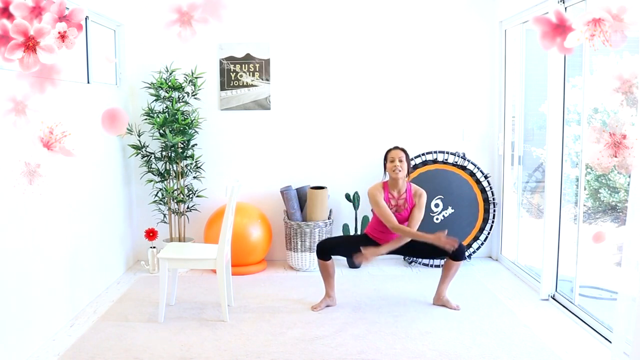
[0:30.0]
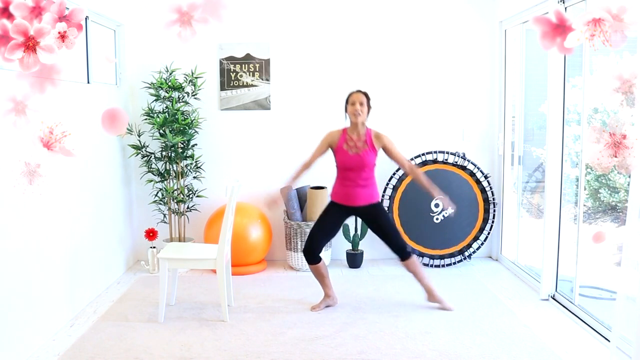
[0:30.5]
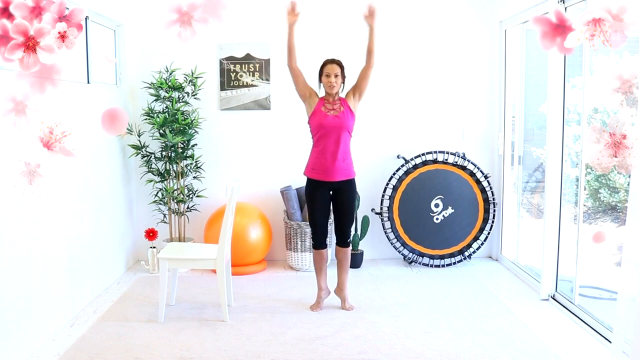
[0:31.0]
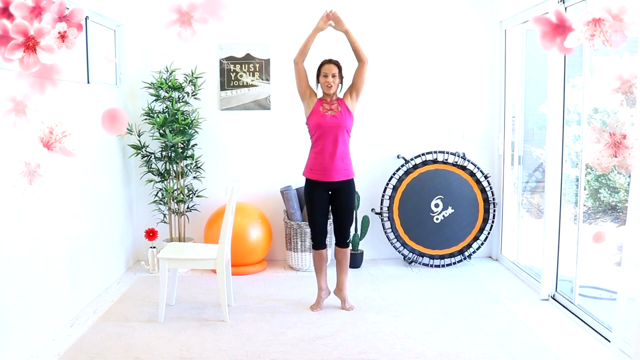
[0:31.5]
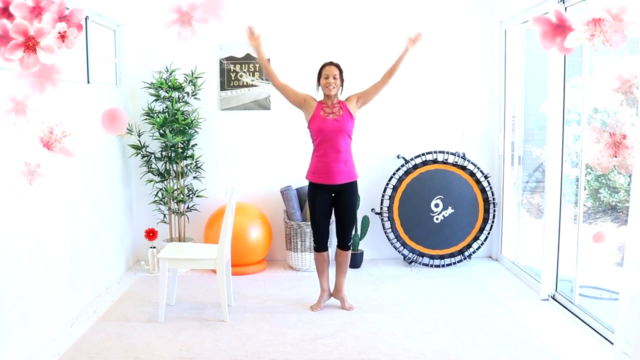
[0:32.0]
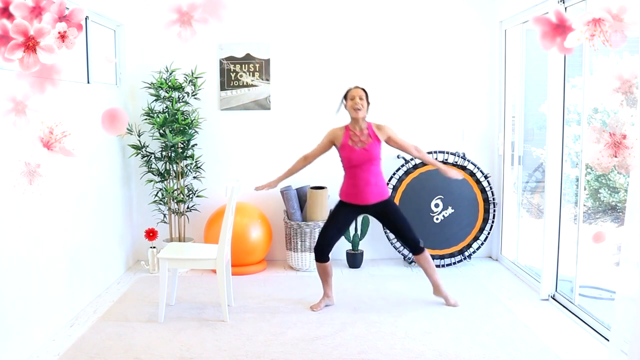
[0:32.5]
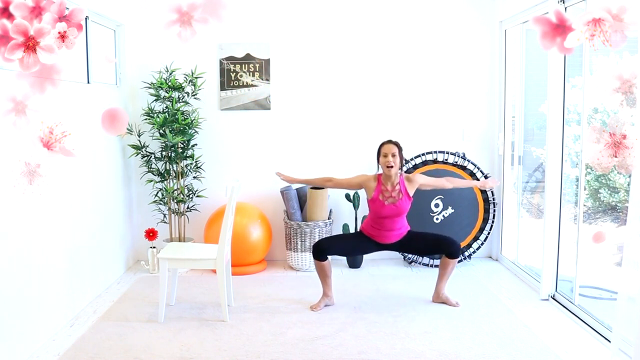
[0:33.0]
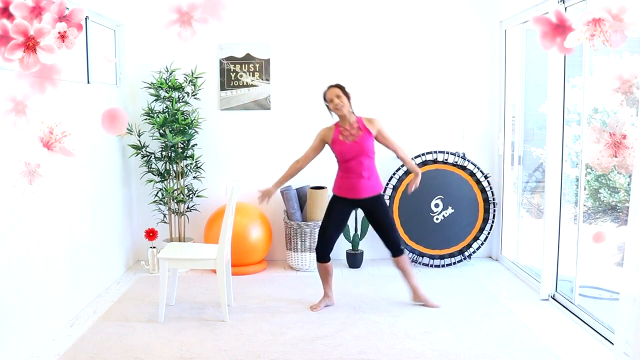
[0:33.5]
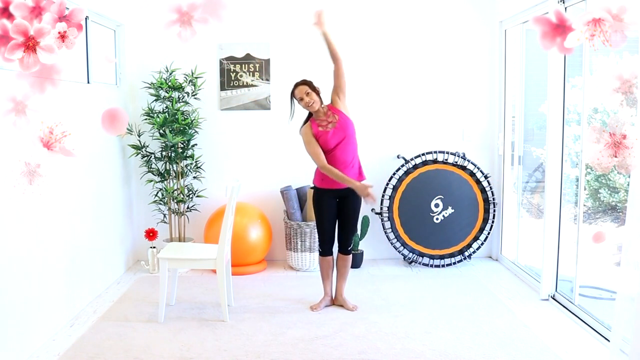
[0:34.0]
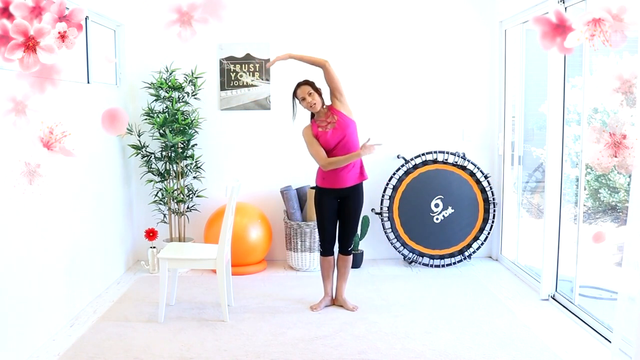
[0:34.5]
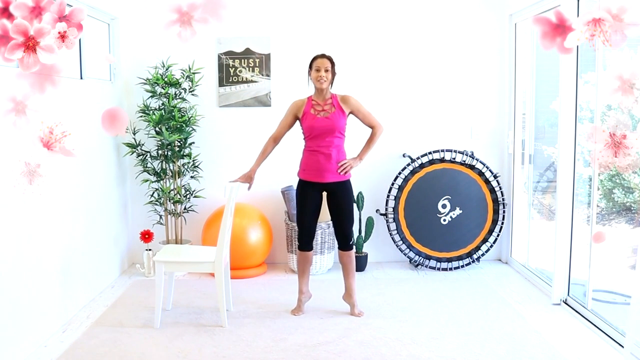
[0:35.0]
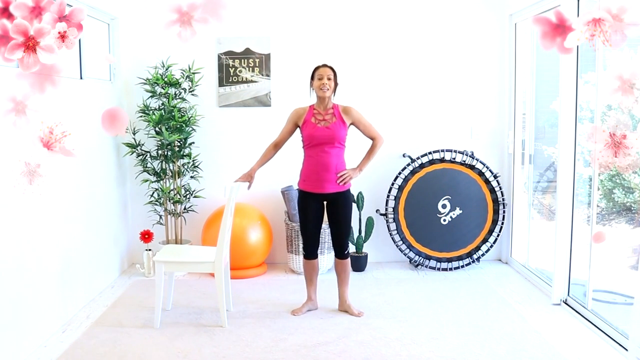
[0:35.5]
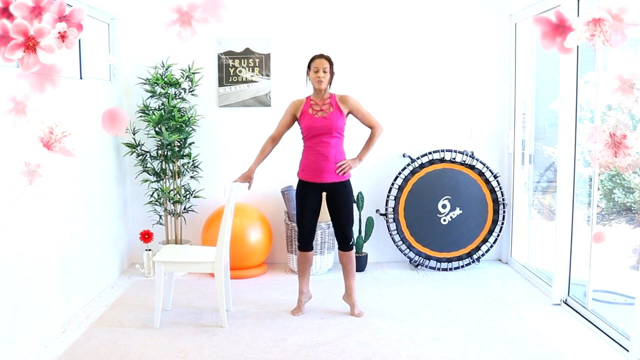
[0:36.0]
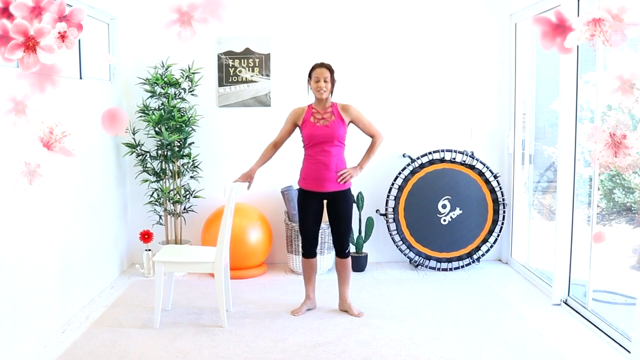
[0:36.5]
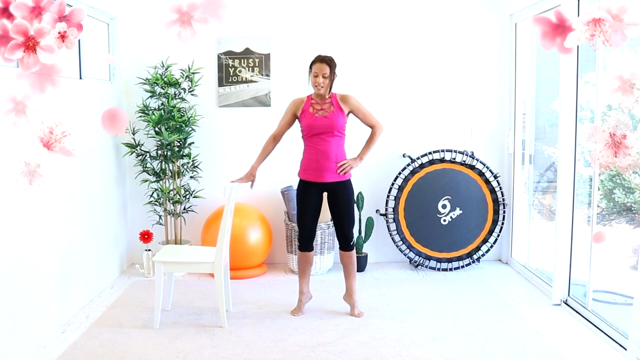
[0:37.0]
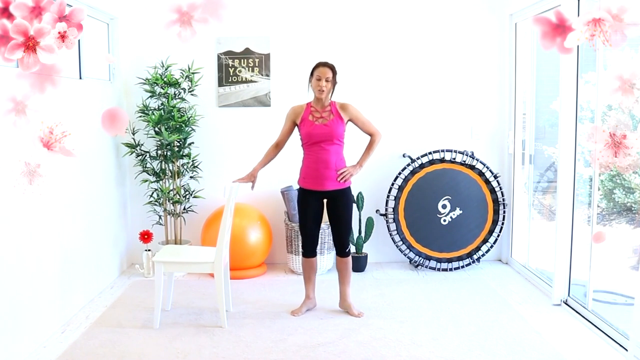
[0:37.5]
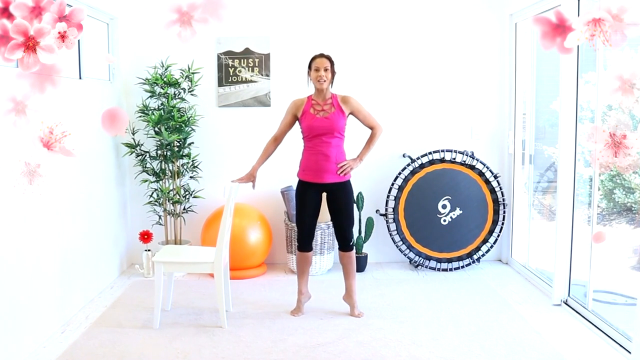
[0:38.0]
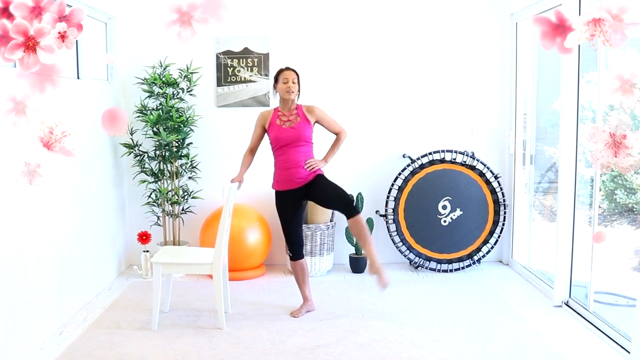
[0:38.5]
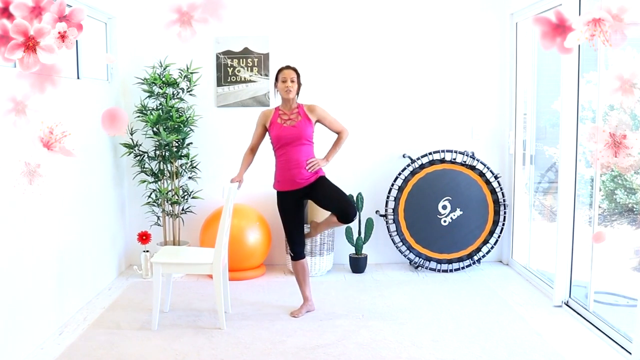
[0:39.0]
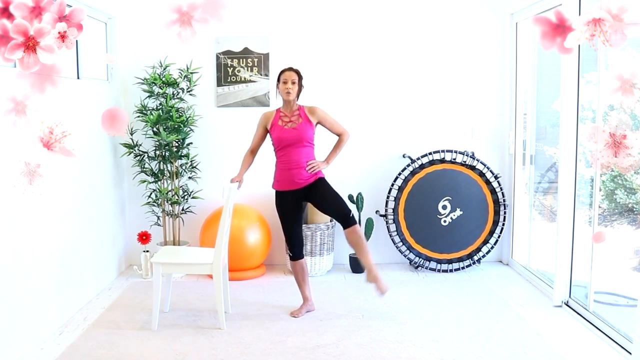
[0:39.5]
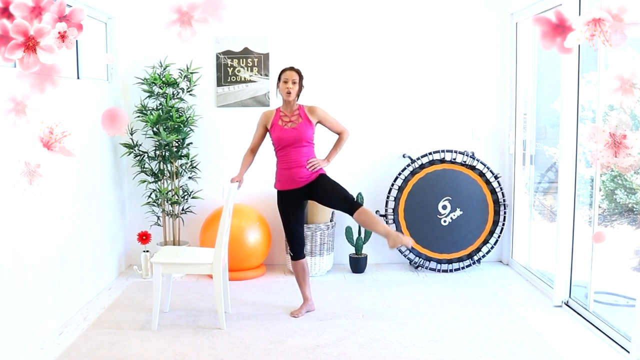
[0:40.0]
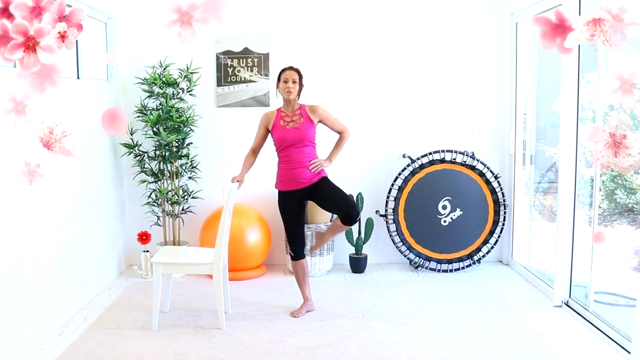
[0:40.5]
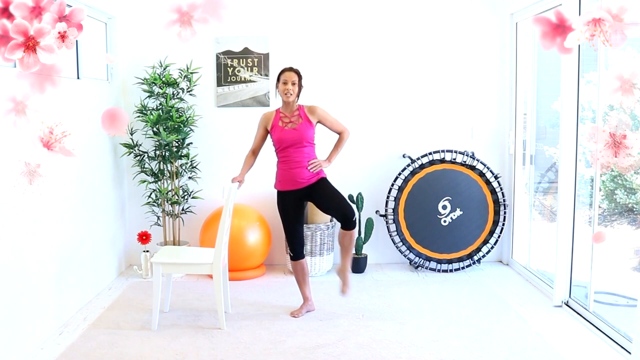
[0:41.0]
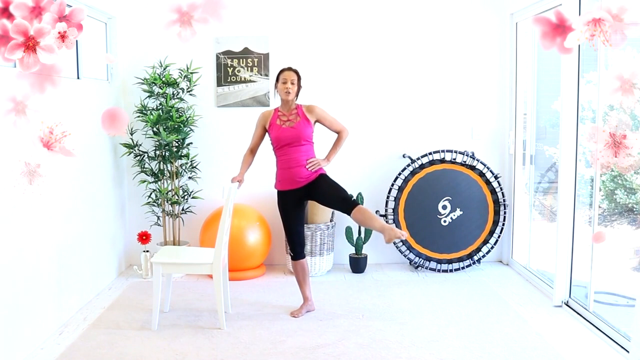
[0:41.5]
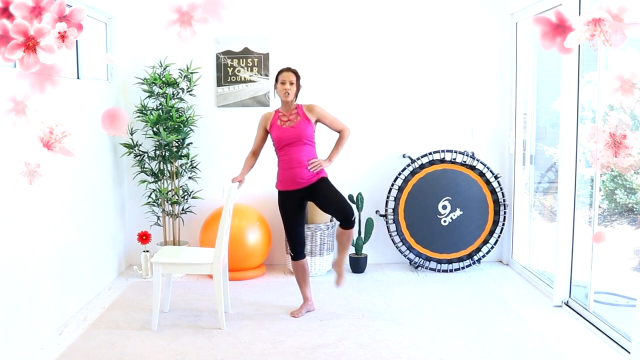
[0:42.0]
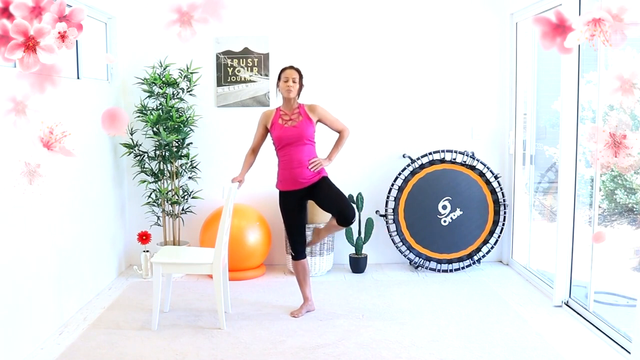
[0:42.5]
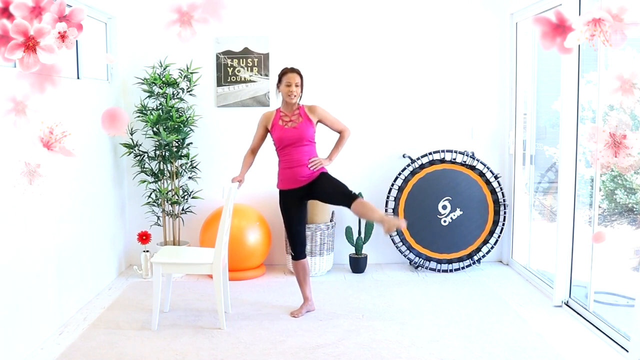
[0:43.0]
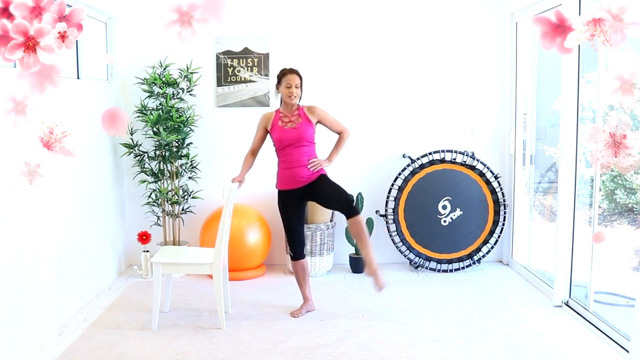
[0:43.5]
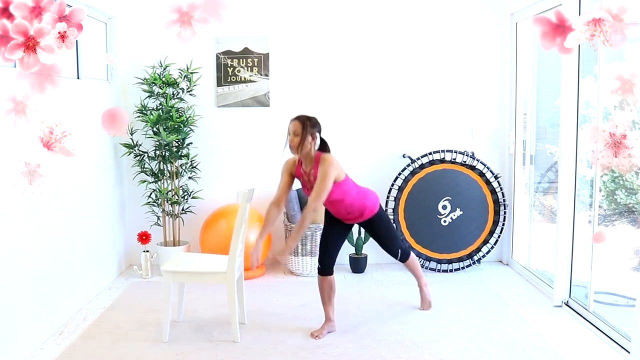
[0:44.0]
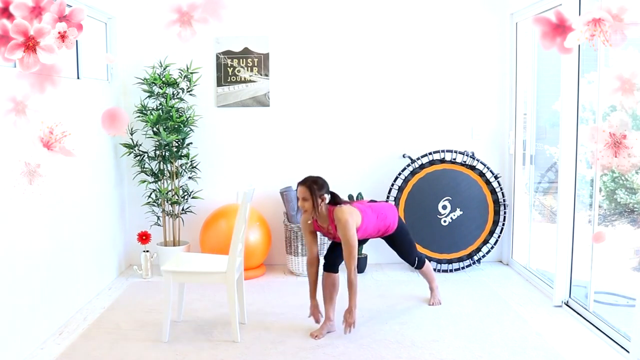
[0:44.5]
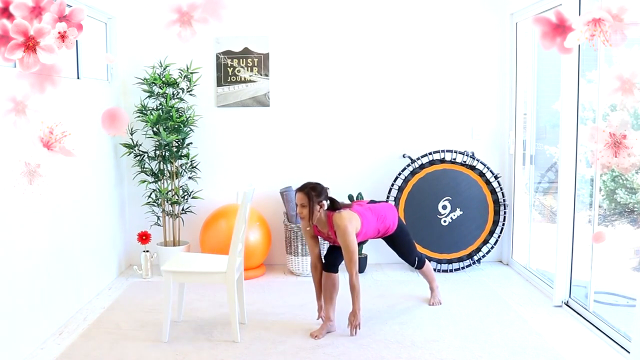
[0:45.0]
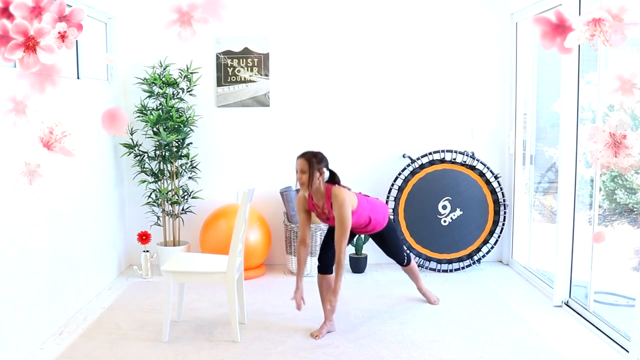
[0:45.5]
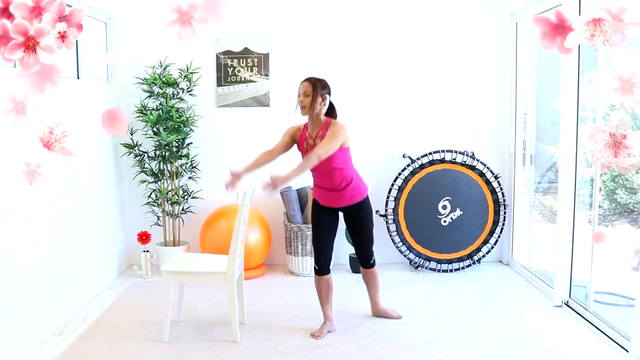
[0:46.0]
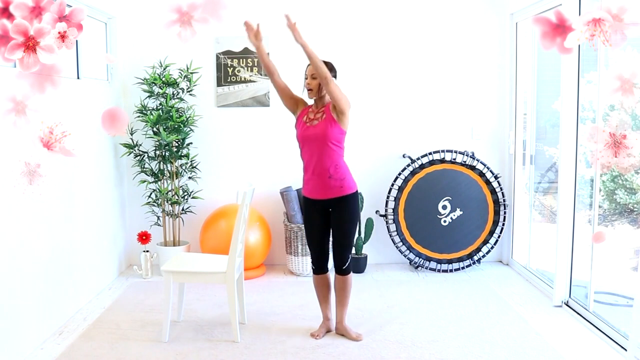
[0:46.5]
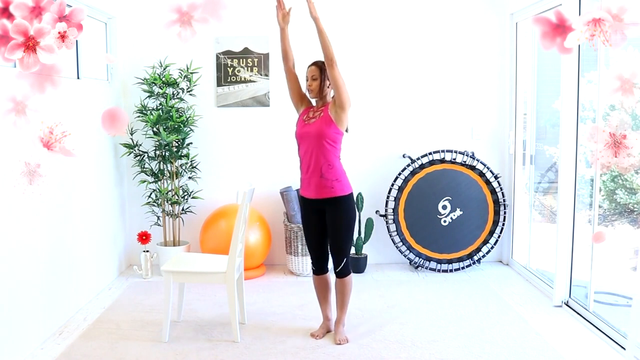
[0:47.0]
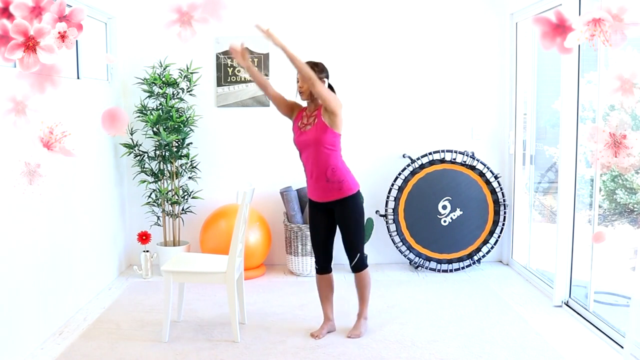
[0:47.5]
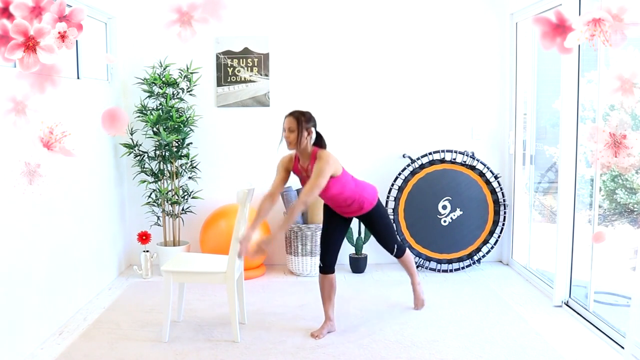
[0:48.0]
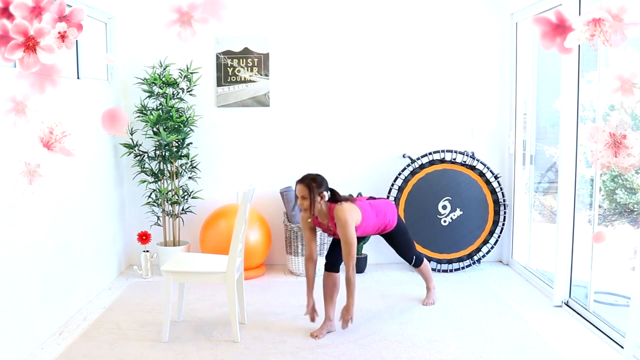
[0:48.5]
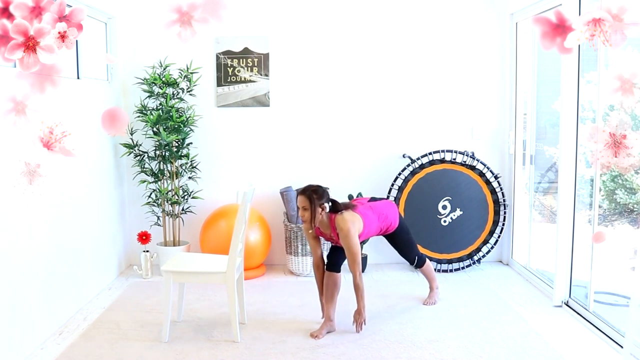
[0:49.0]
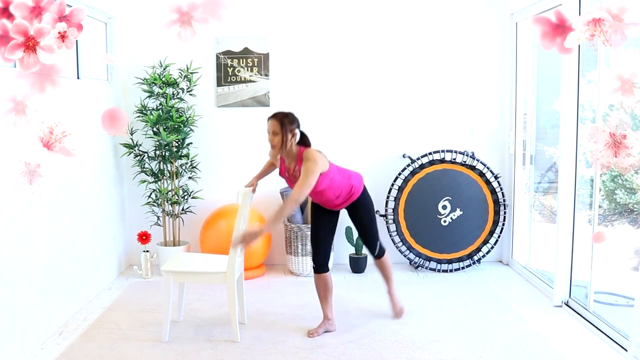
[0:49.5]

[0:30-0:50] The barefoot woman in the pink top and black sweatpants continues her aerobic-type exercises. A sign in the back reads "trust your", with the rest not visible. A plant is to her right, and there is a white chair, an orange rubber exercise ball, and a basket with some items probably for exercise, which could be yoga mats. What looks like a cactus plant is behind her, along with the trampoline, which has writing on it, a gray center and an orange ring around the gray center. Flower animations appear in the upper left-hand corner and in the upper right-hand corner by the sliding glass door. The floor looks white. The video almost looks AI, though this is uncertain. With her hair in a ponytail, she does slower aerobic exercises and tiptoe stretches, swings her legs in and out, and talks to the screen. She does another type of squat and stretch, using the white chair for balance.